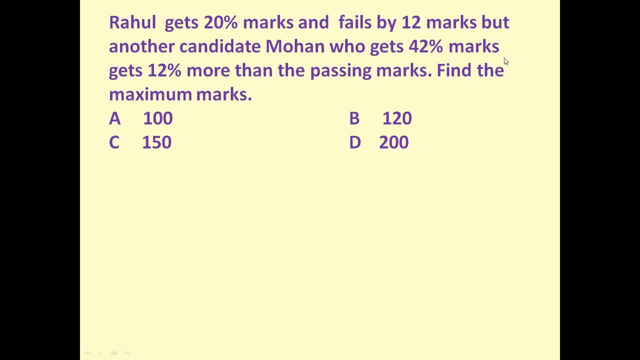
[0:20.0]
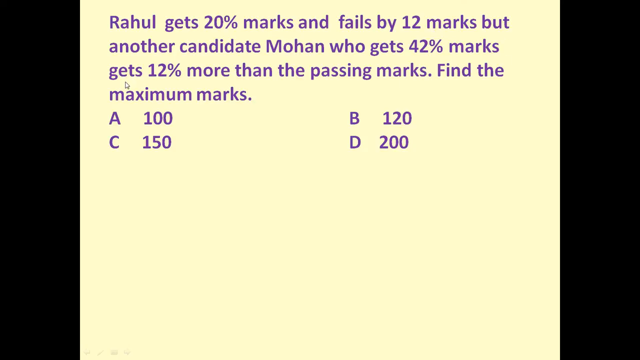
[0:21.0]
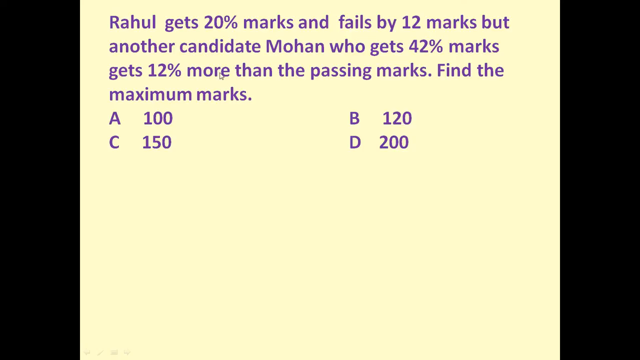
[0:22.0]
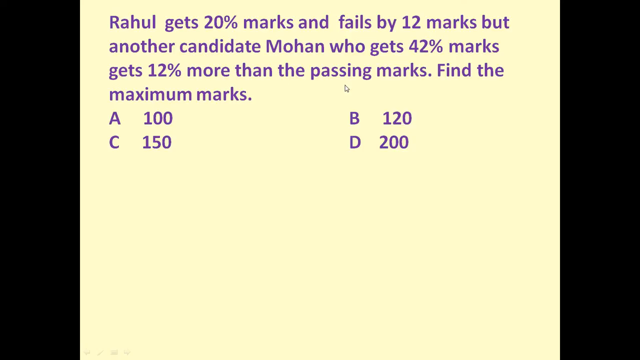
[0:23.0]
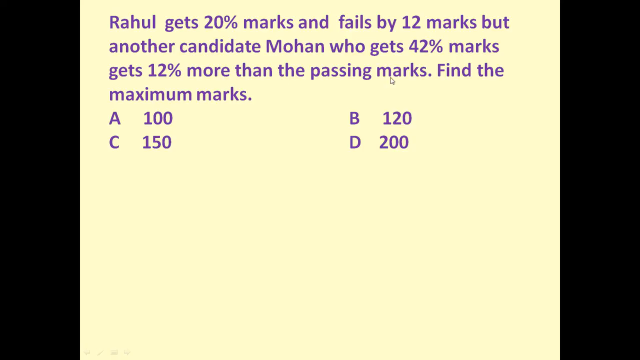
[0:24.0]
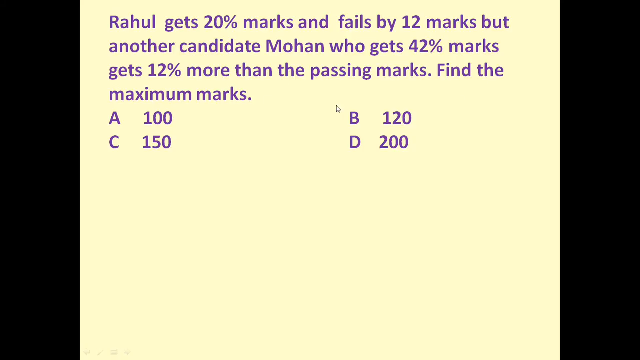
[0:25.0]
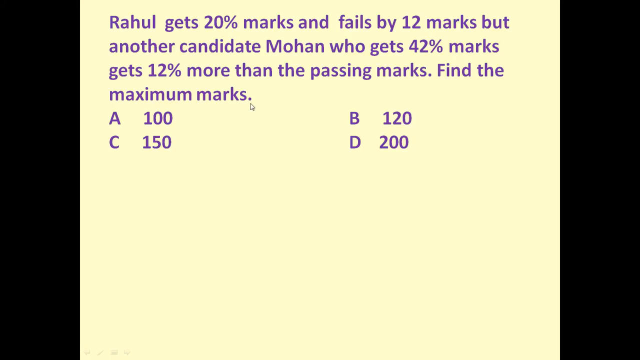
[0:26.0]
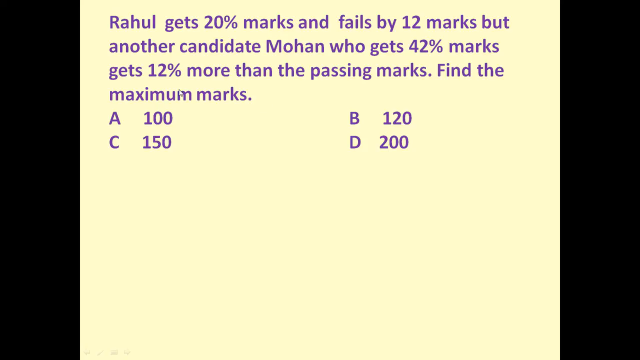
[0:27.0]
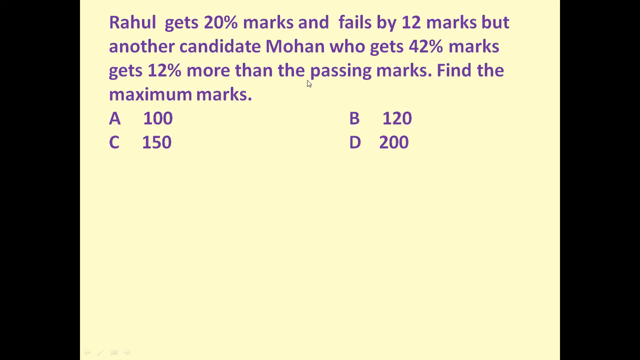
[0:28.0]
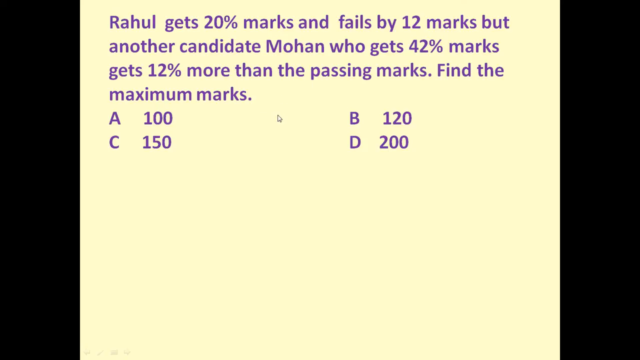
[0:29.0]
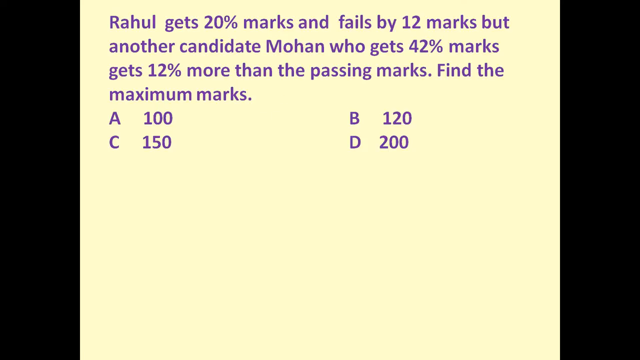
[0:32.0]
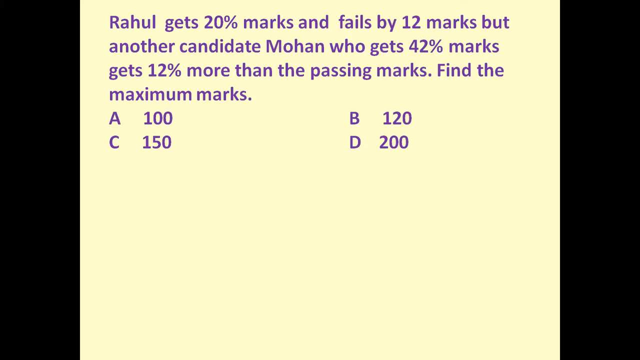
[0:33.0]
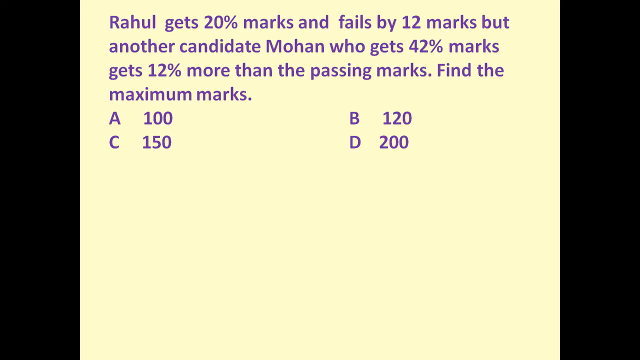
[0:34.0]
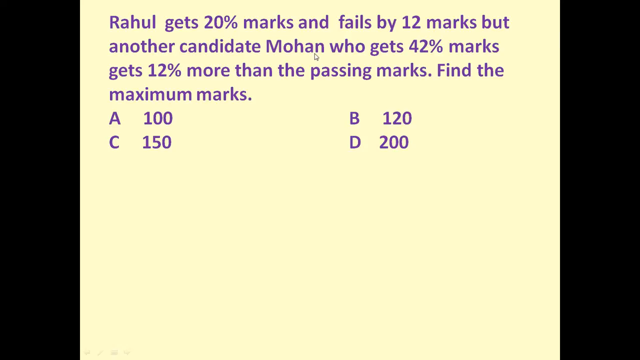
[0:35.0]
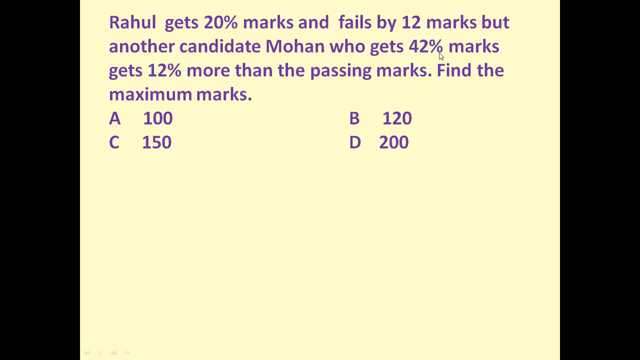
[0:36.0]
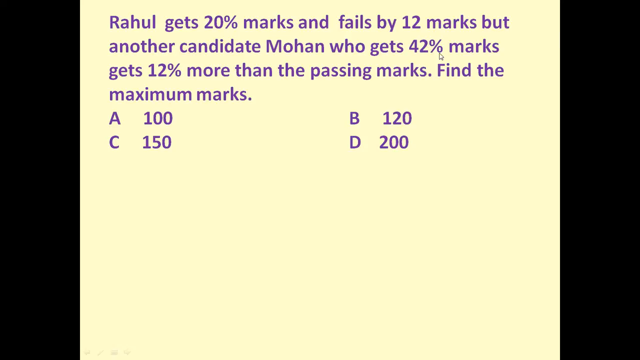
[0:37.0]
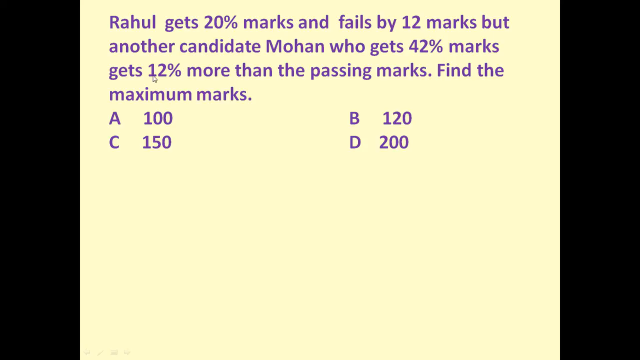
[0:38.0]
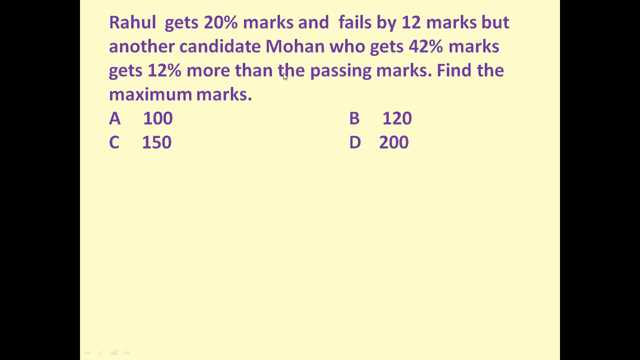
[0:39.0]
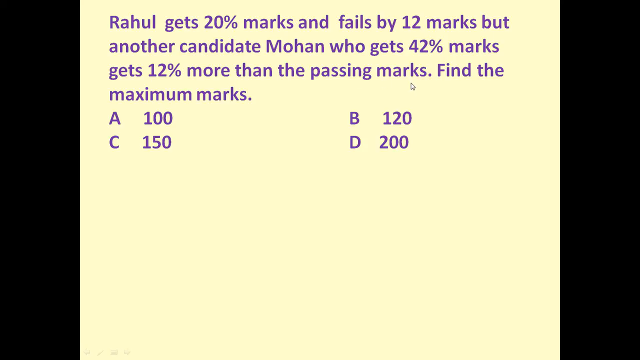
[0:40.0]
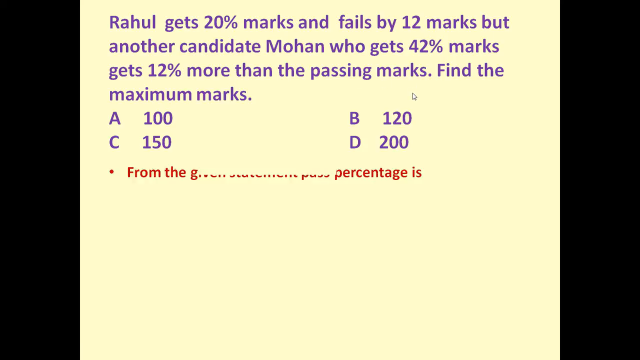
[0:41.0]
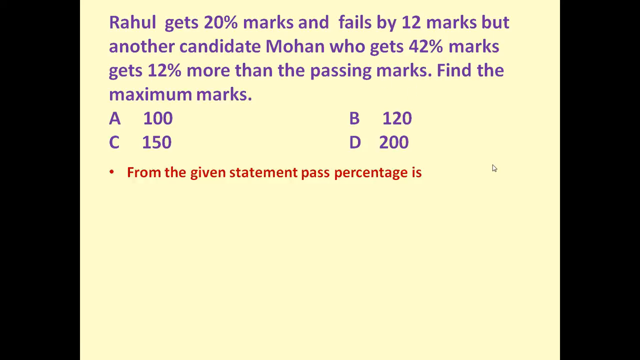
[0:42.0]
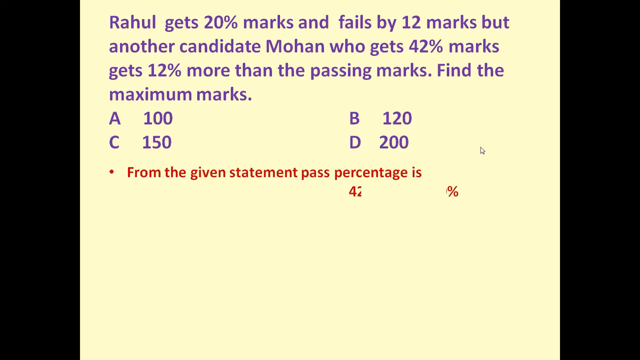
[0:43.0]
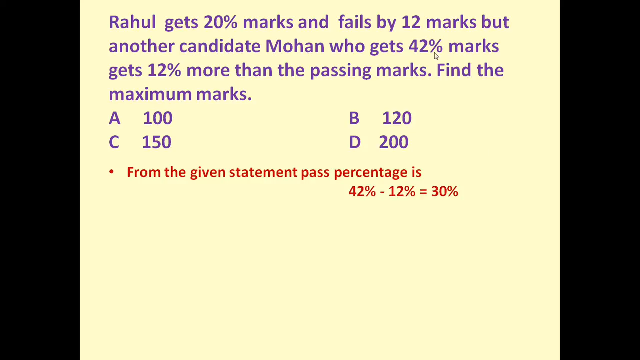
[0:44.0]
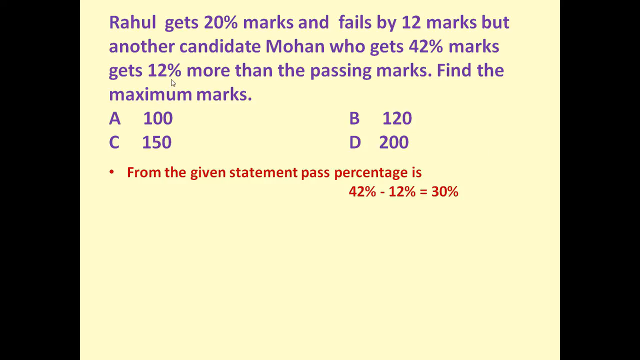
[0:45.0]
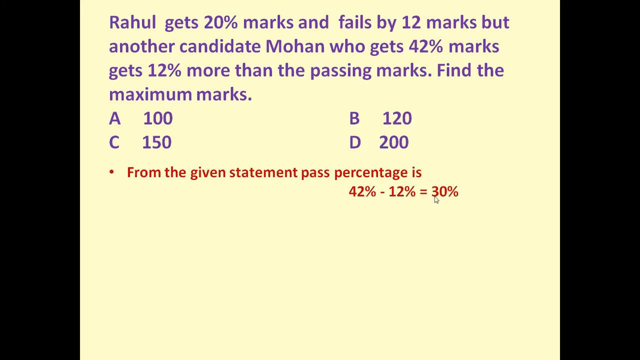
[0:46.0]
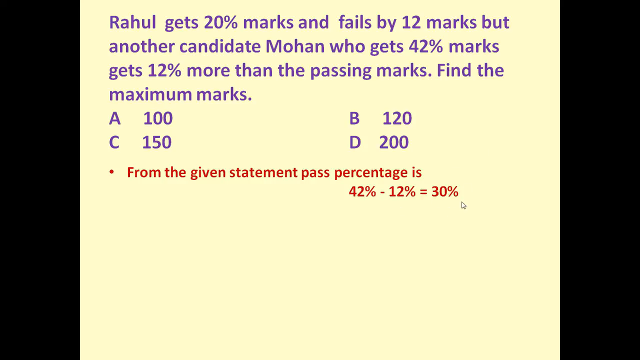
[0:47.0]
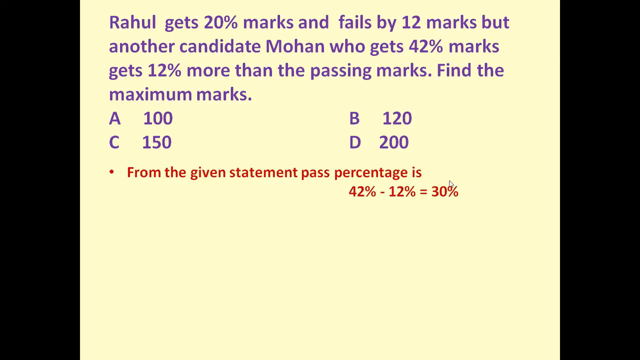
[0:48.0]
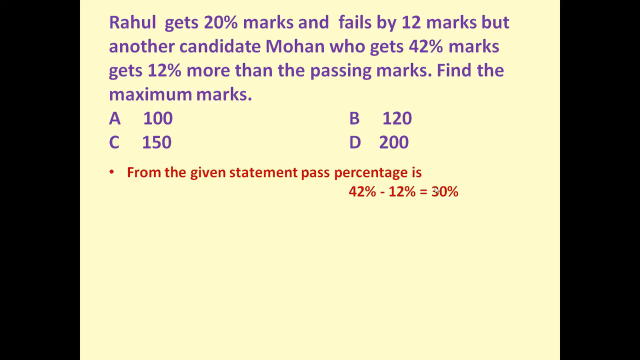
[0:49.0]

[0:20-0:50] The percentage problem is shown: Raul gets 20% marks and fails by 12 marks, while another candidate, Mohan, who gets 42% marks, gets 12% more than the passing marks; the task is to find the maximum marks. The options are A, 100; B, 120; C, 150; and D, 200. The working begins: from the given statement, the pass percentage is 42% less 12%, which equals 30%, so the passing marks are 30%.